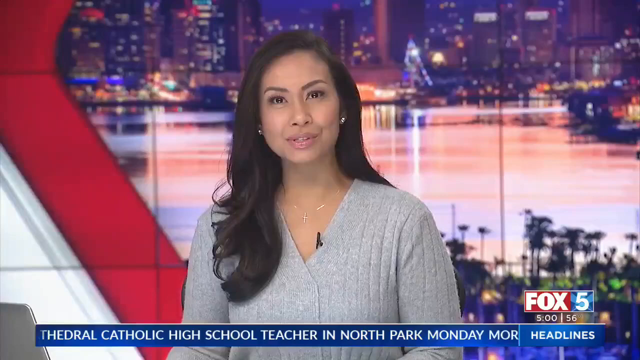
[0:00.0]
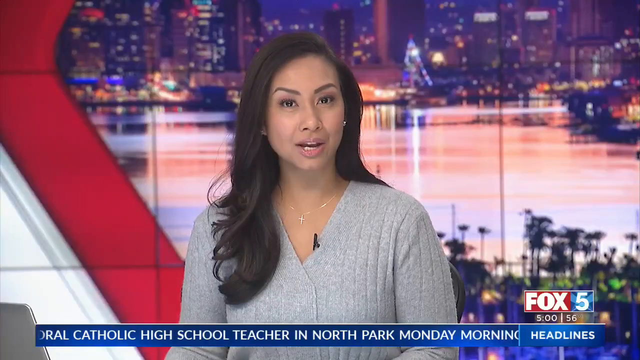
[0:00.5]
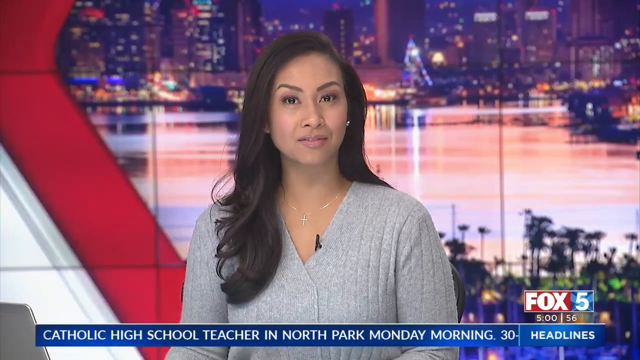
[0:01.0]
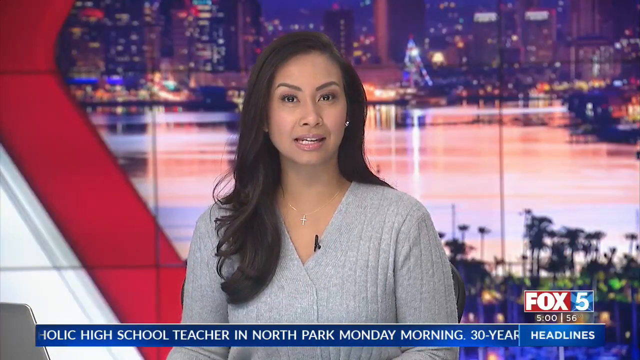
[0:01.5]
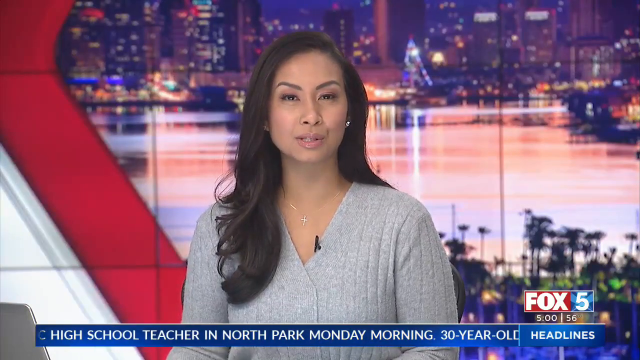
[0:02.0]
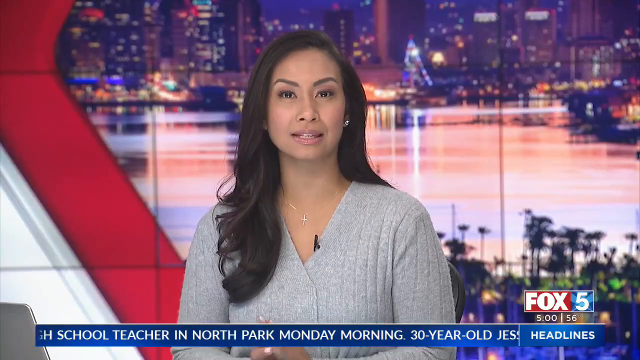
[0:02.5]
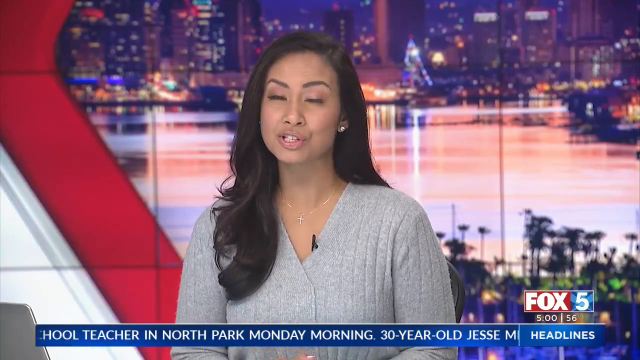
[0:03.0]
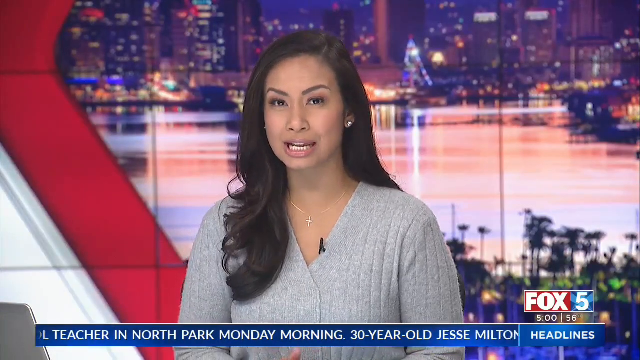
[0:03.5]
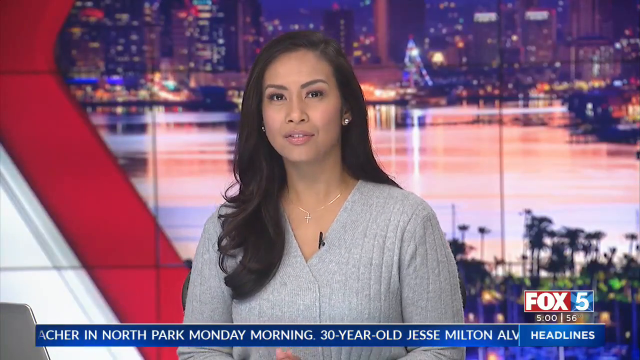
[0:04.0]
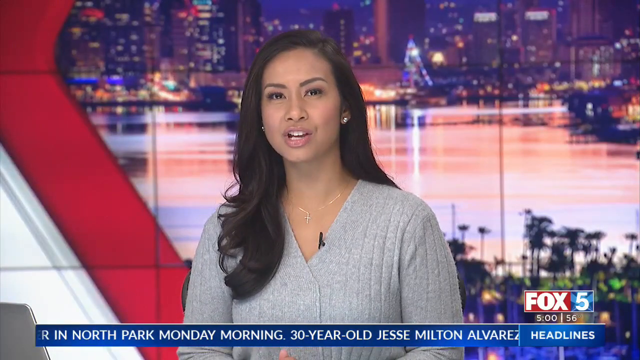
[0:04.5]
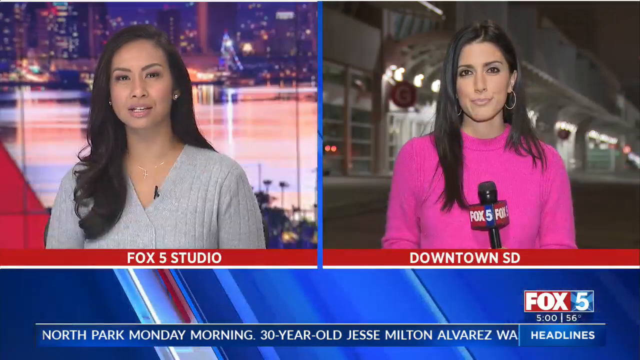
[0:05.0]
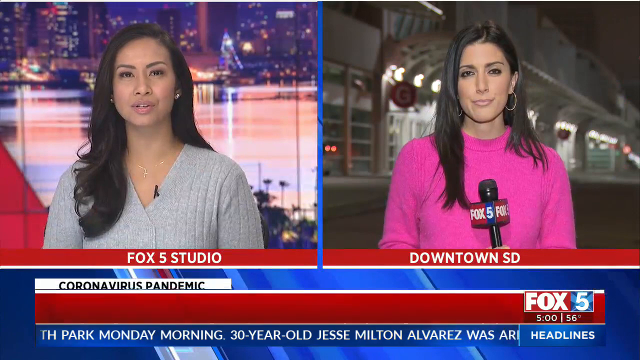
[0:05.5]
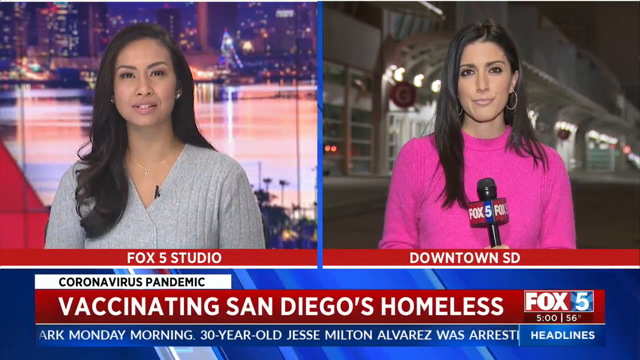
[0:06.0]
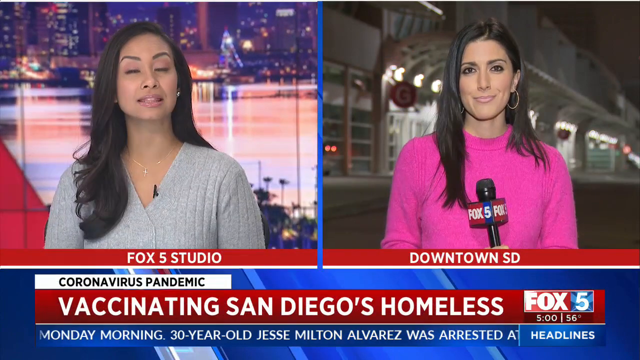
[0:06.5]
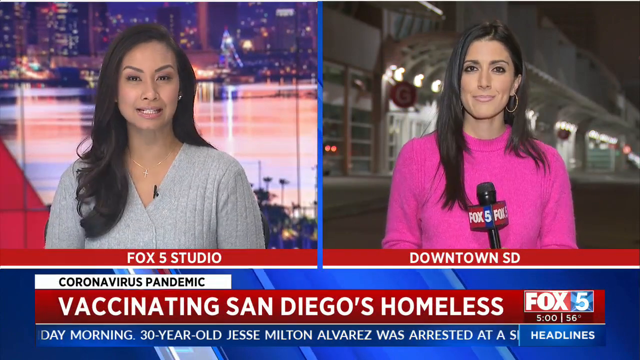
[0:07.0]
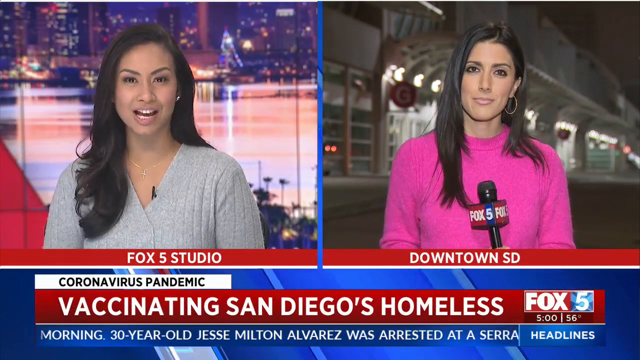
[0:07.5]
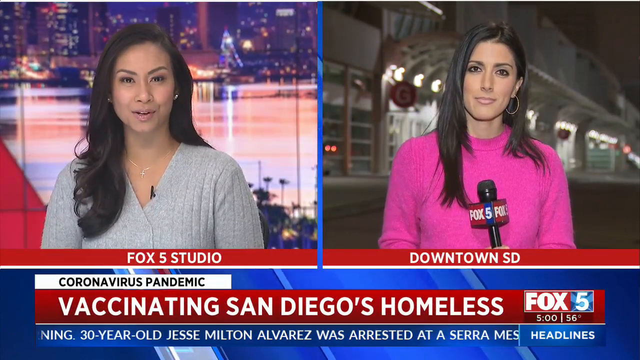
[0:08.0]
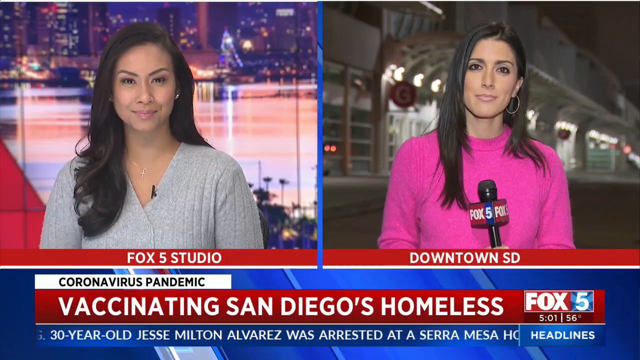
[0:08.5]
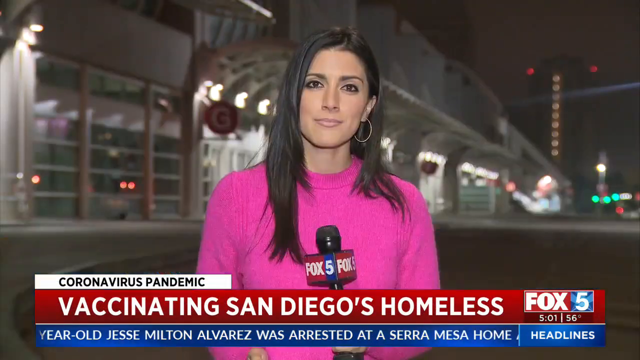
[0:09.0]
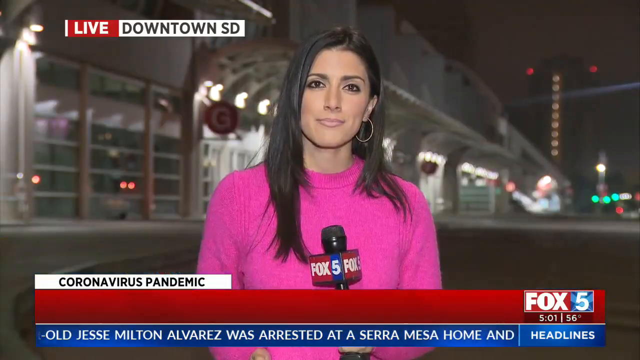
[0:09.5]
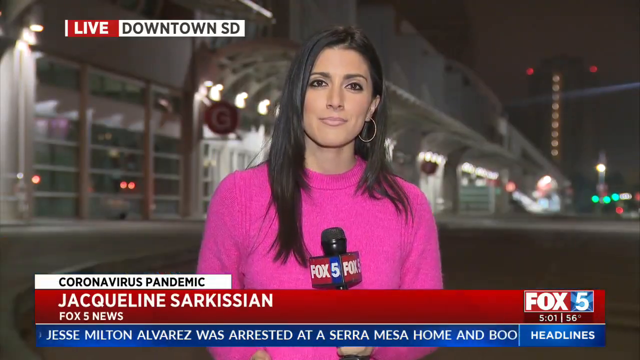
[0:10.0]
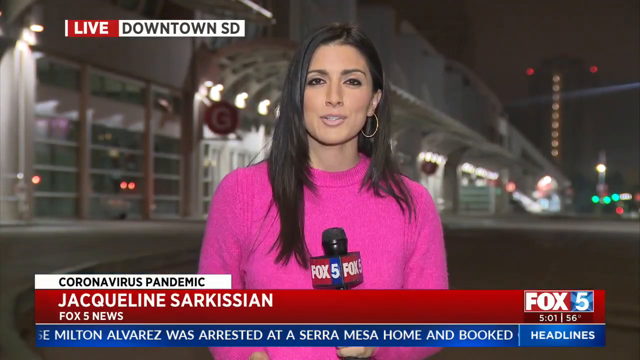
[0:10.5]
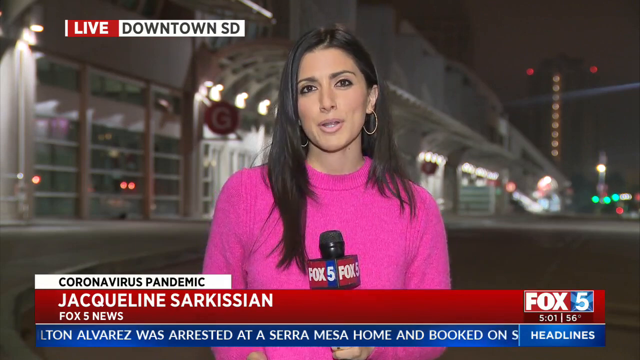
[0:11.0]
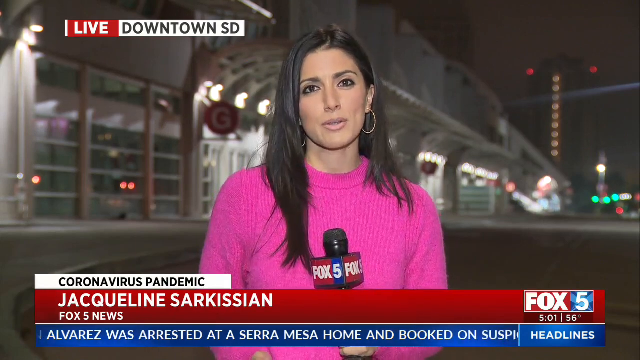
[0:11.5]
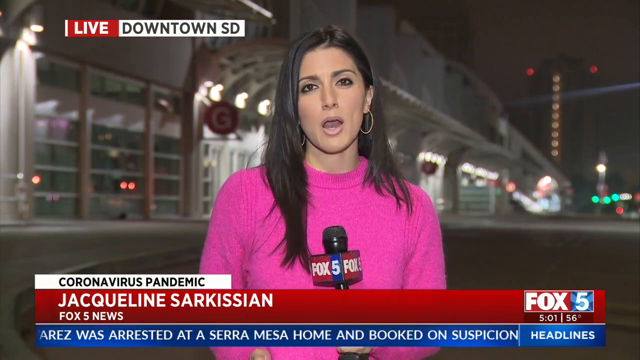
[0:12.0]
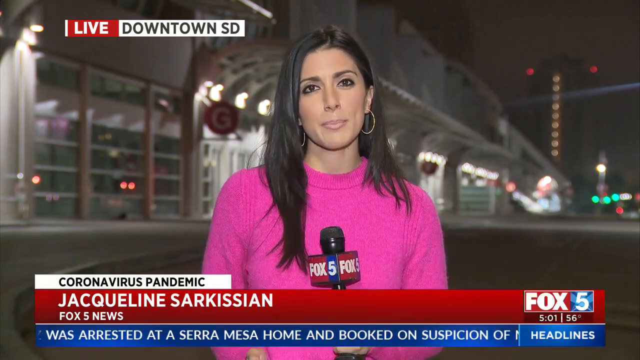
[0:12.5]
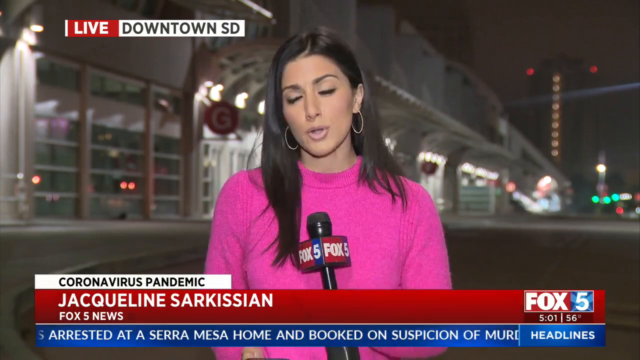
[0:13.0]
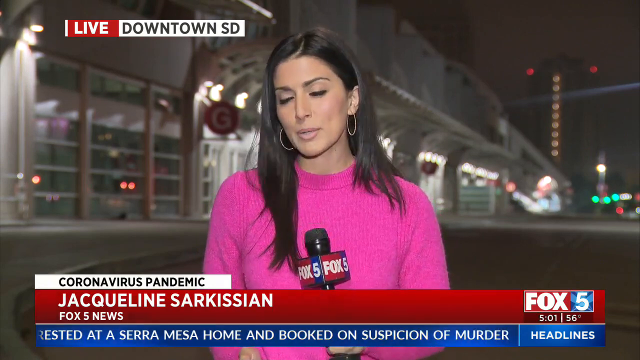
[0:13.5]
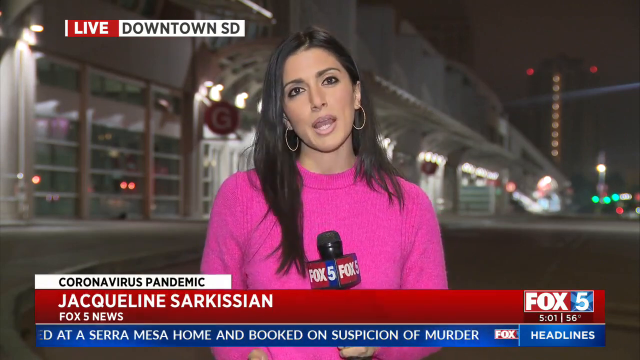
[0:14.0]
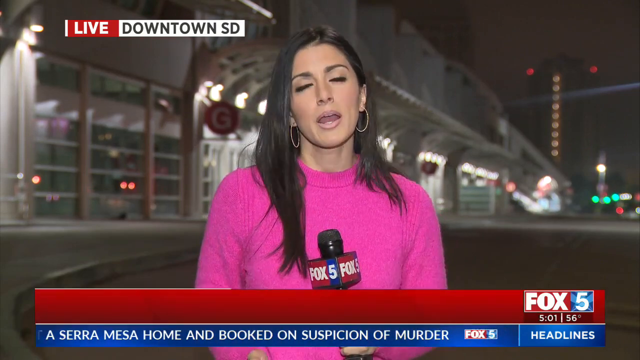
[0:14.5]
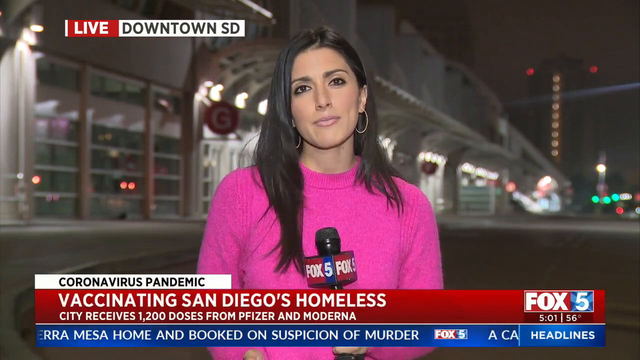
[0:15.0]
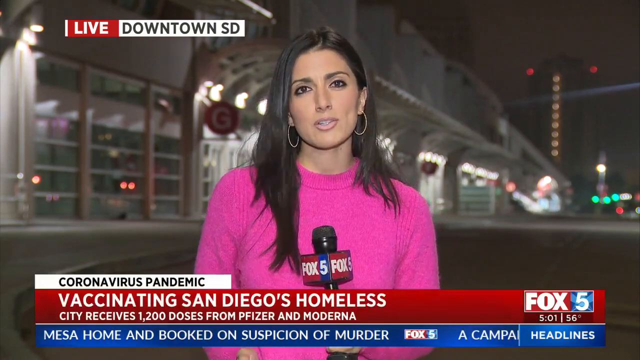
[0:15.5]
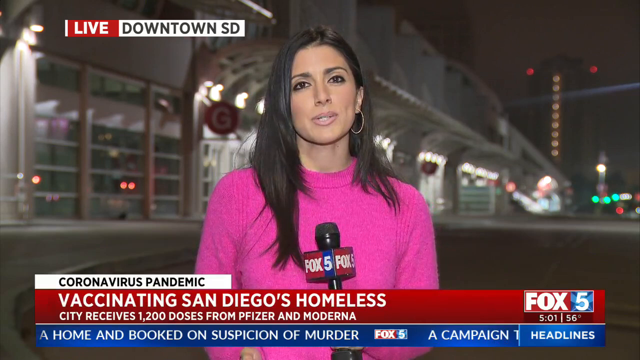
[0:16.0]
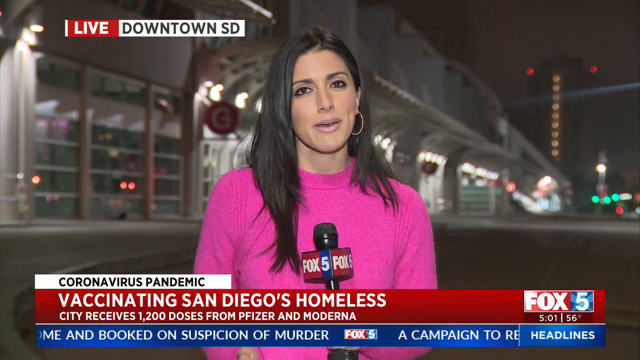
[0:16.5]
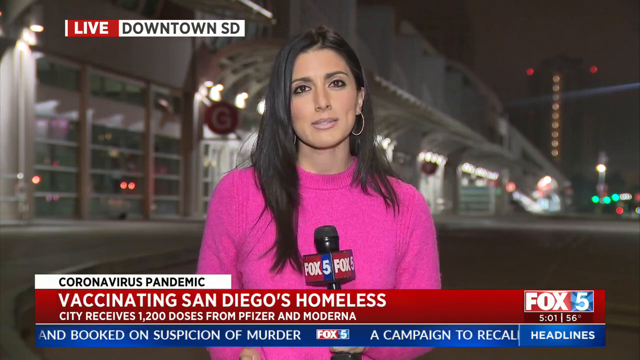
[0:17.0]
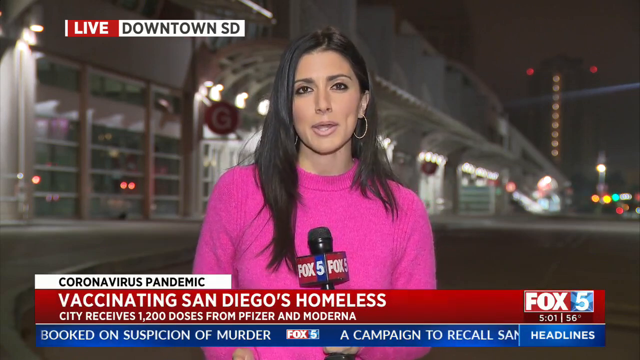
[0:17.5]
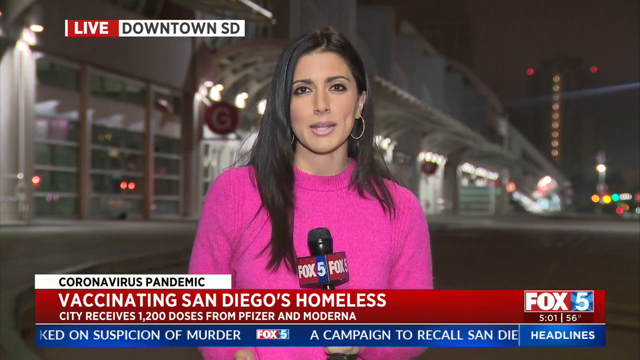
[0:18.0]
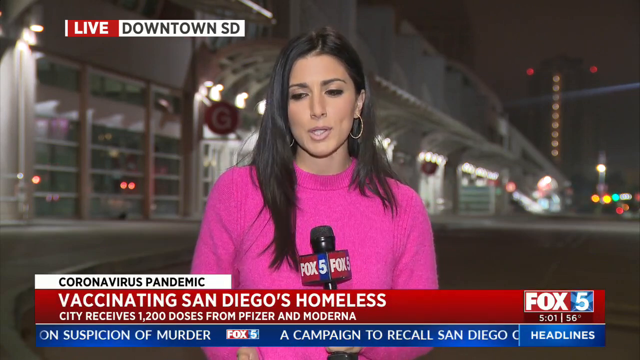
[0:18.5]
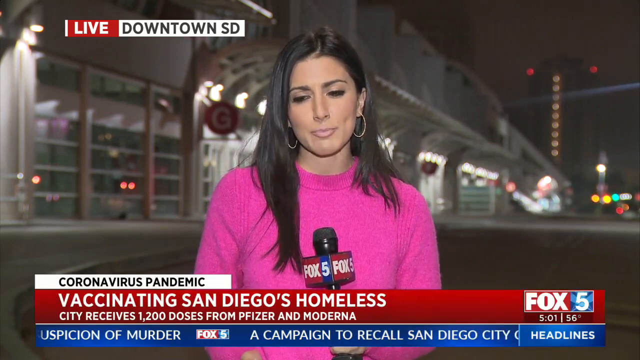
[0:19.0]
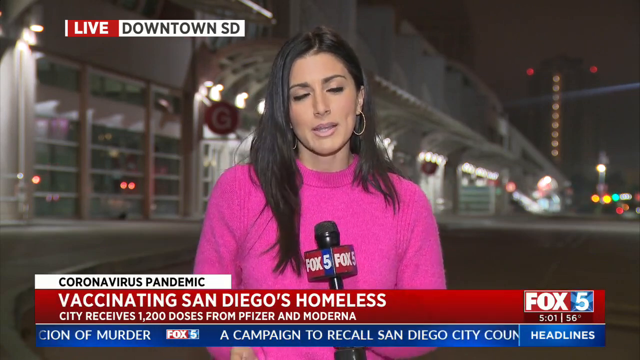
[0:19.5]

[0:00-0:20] The video opens on Fox with a woman who appears to be of Asian descent, wearing a gray jersey and with long black hair, who seems to be reporting live from the studio. Behind her is a picture of what appears to be a city at night. The view then switches to a split screen showing two news anchors: the first woman and a new one, a white woman with long black hair in a pink jersey. She holds a microphone that says "Fox 5", and just below her picture is the word "downtown", indicating she is reporting from downtown. Below the pictures of the two anchors, a headline reads "coronavirus pandemic vaccinating San Diego's homeless". The two seem to have a brief conversation, and the image switches to a full screen of the woman reporting from downtown, whose name is shown as Jacqueline Sarkissian. Behind her is some type of building; she is reporting live, and it is evening, with the street lights and building lights on.